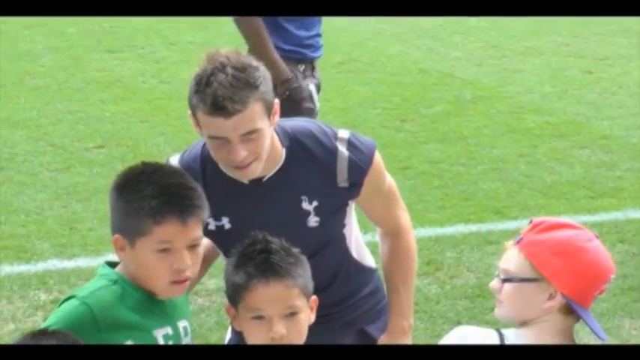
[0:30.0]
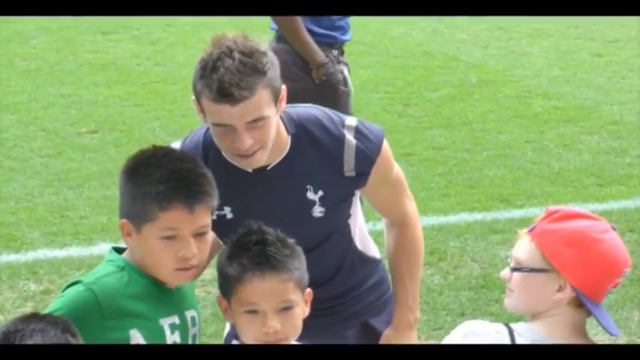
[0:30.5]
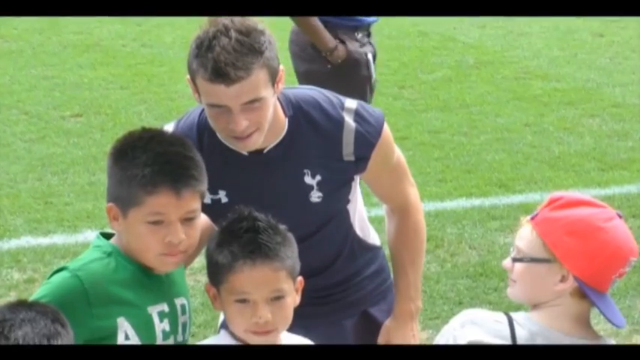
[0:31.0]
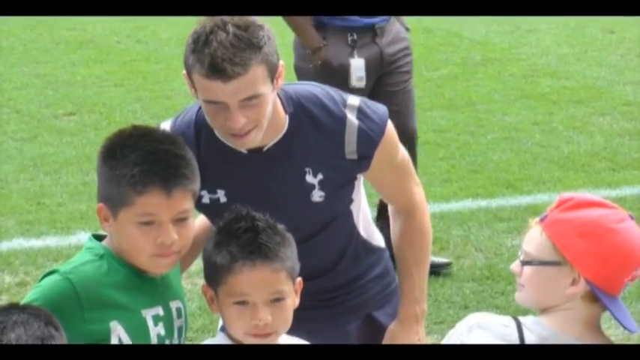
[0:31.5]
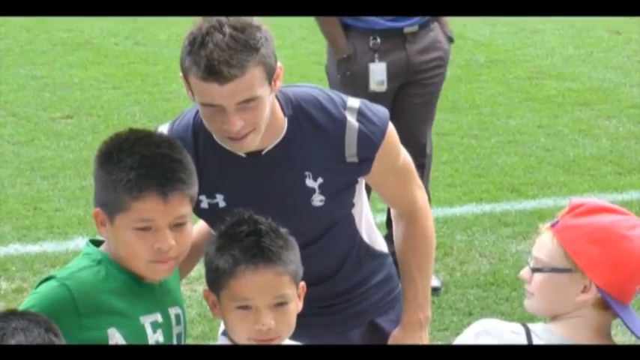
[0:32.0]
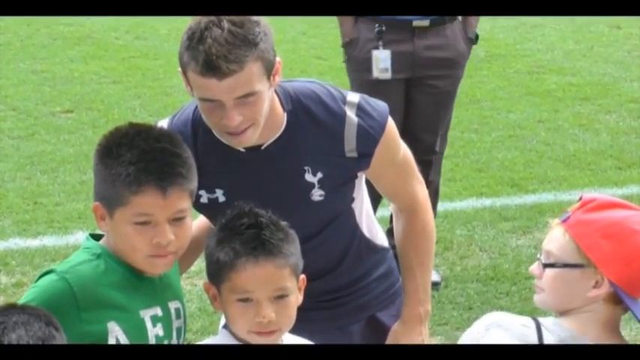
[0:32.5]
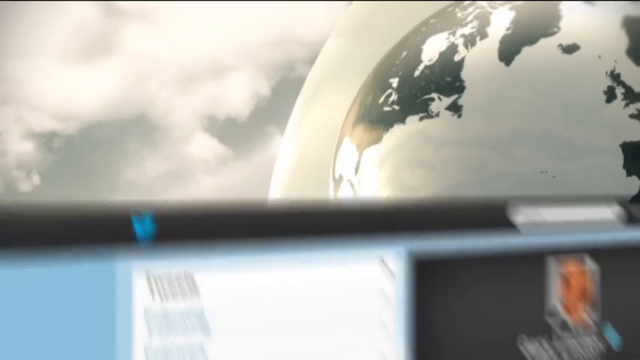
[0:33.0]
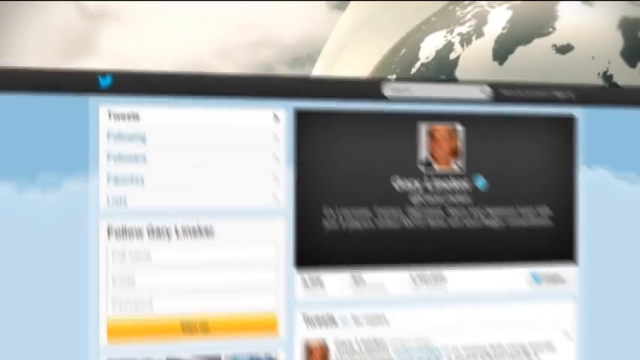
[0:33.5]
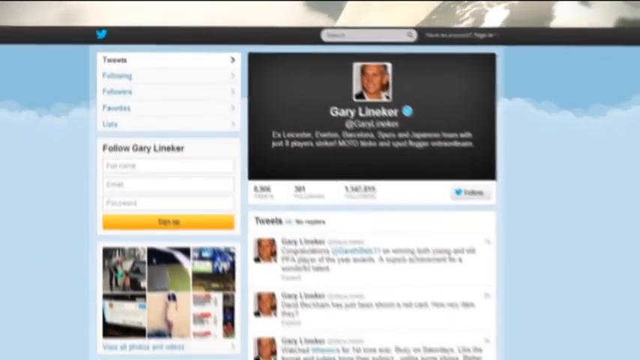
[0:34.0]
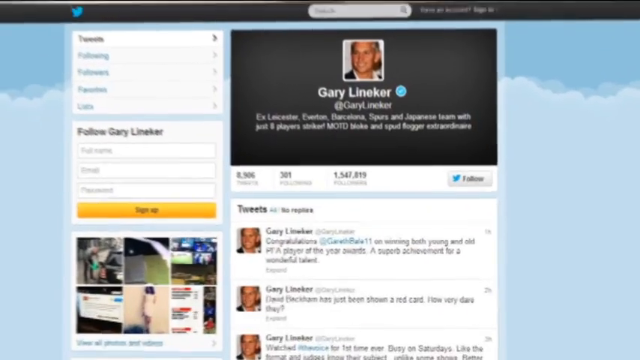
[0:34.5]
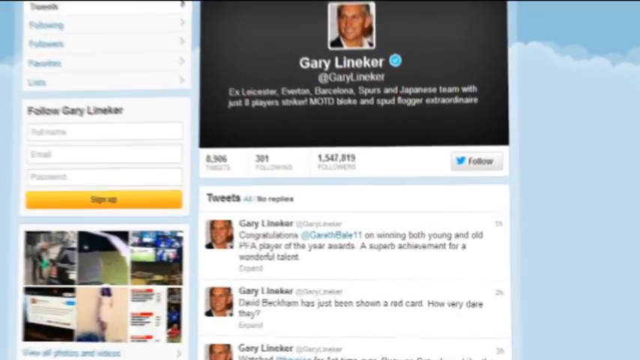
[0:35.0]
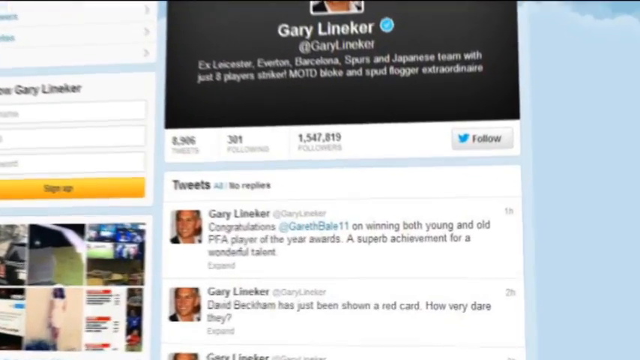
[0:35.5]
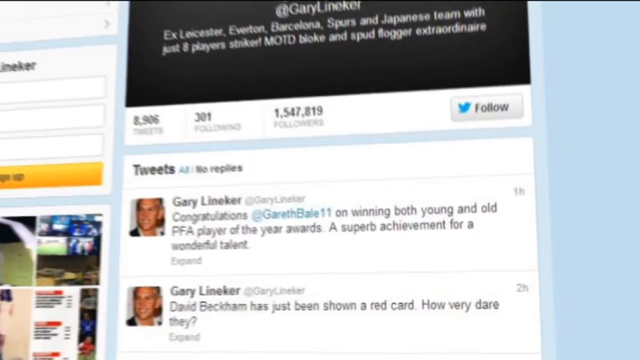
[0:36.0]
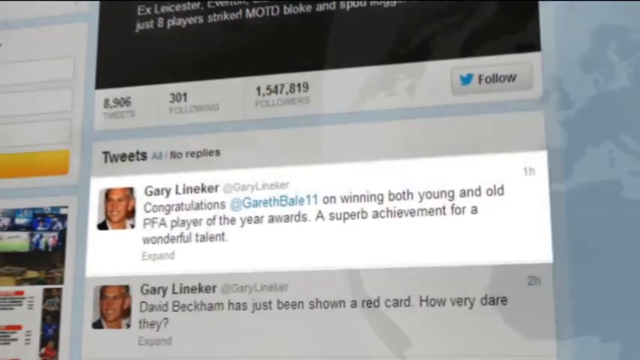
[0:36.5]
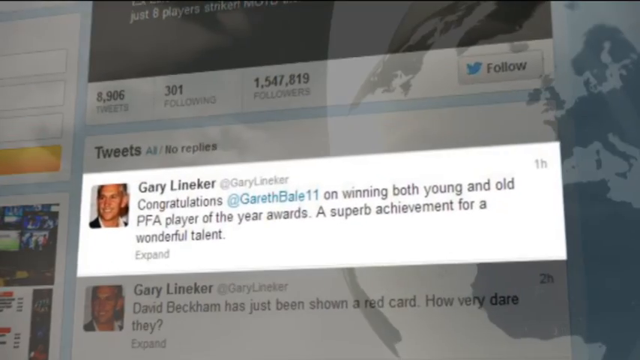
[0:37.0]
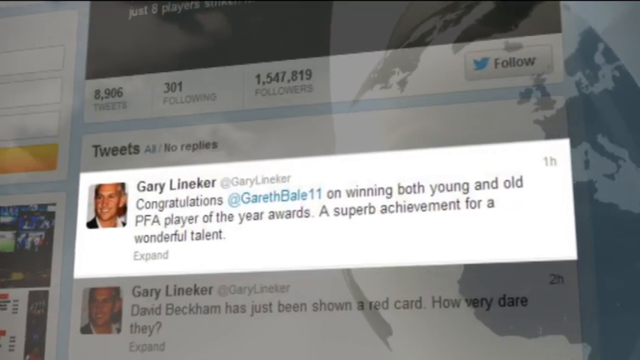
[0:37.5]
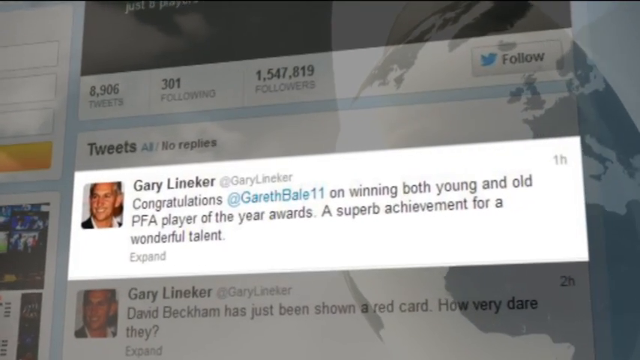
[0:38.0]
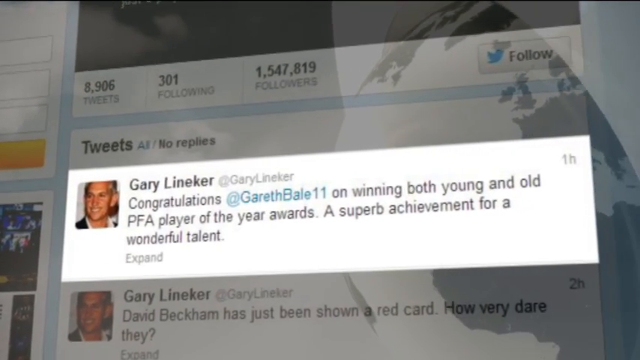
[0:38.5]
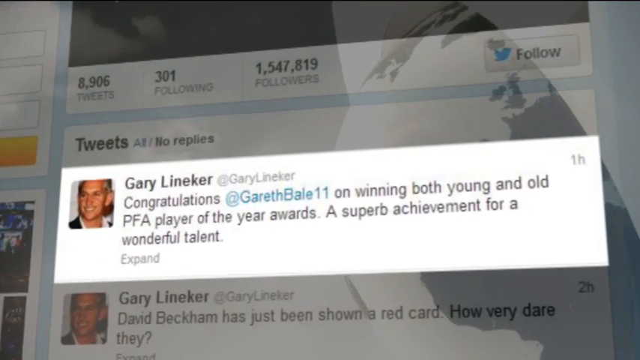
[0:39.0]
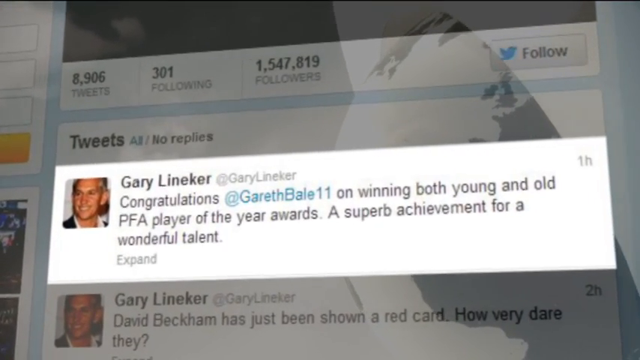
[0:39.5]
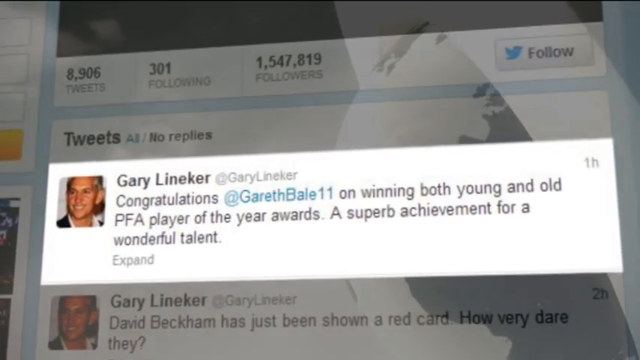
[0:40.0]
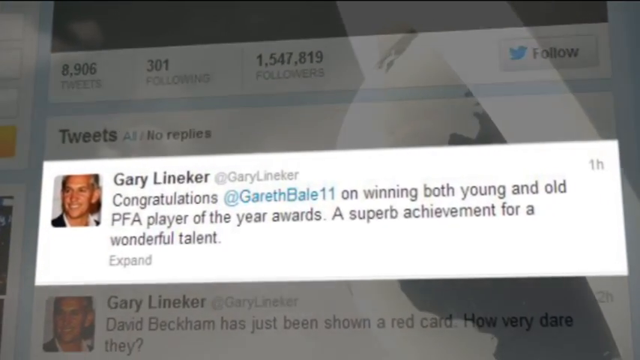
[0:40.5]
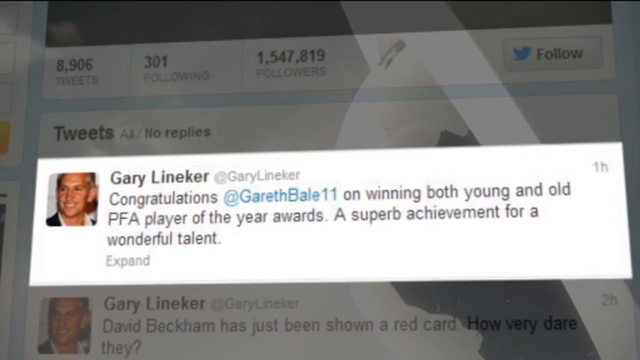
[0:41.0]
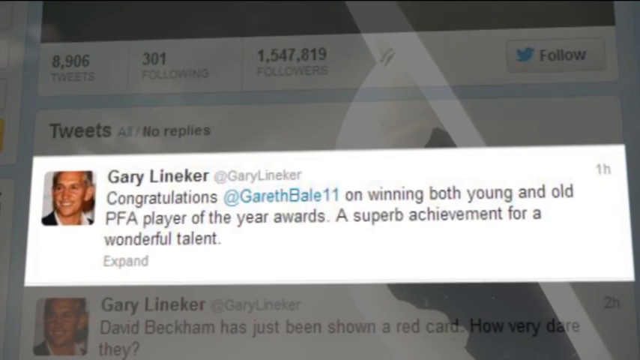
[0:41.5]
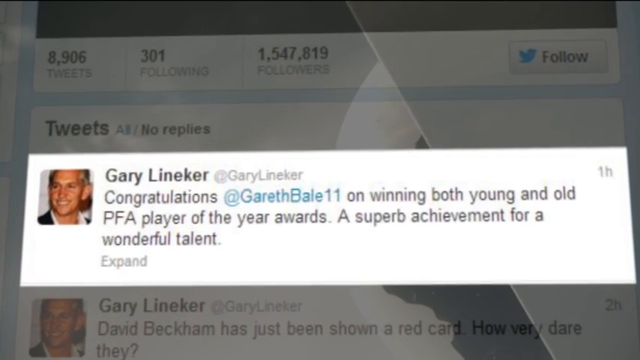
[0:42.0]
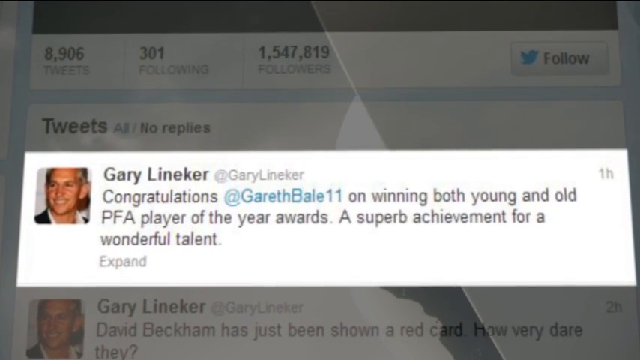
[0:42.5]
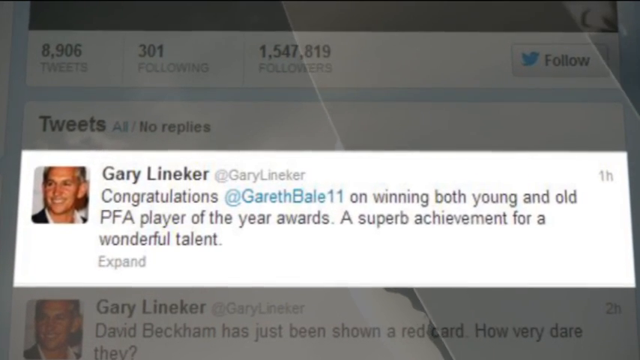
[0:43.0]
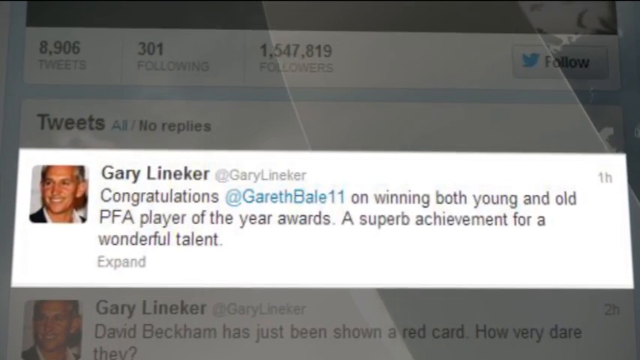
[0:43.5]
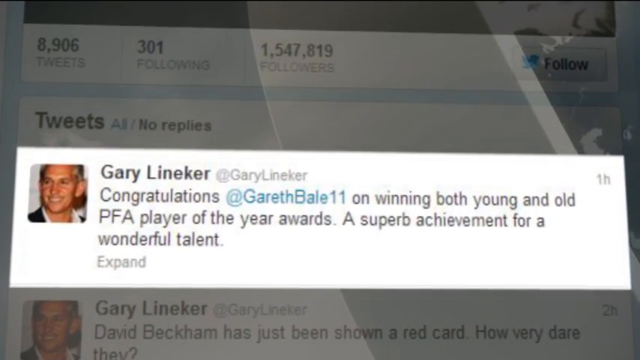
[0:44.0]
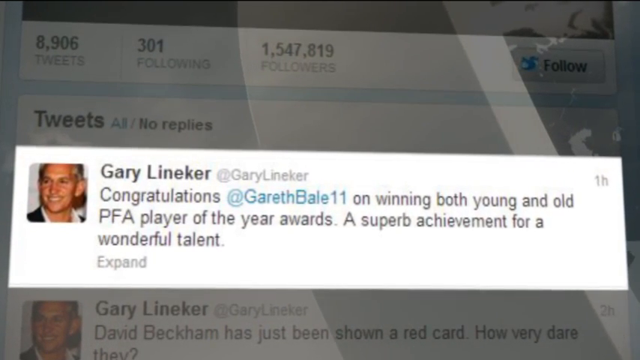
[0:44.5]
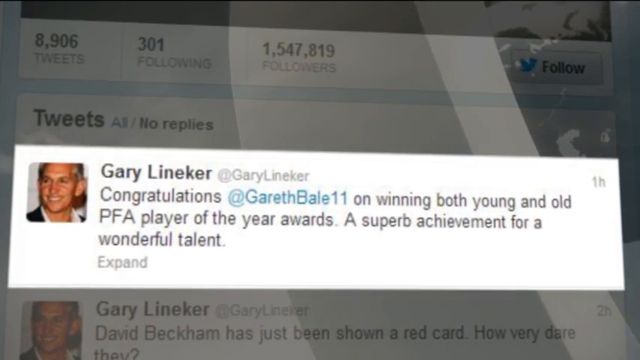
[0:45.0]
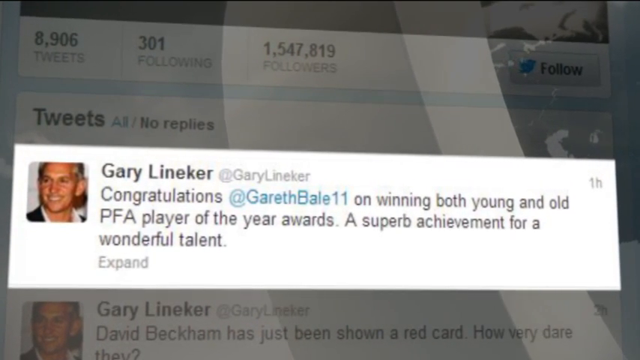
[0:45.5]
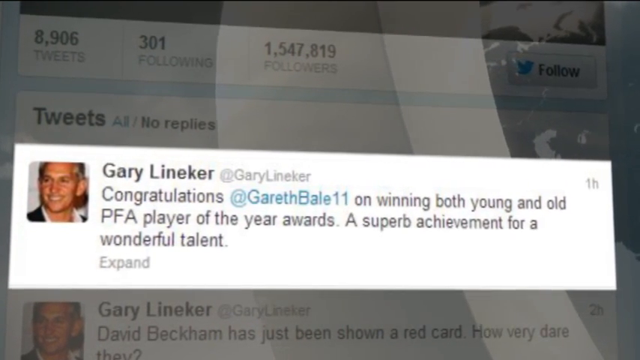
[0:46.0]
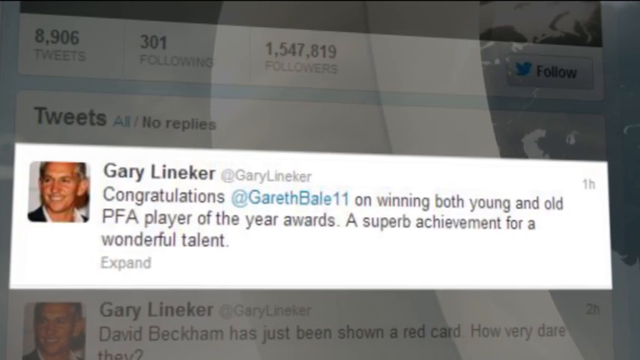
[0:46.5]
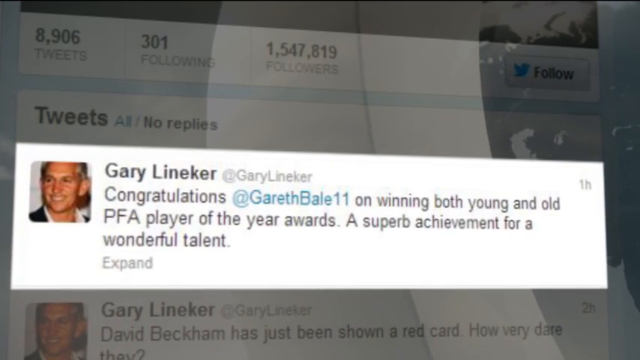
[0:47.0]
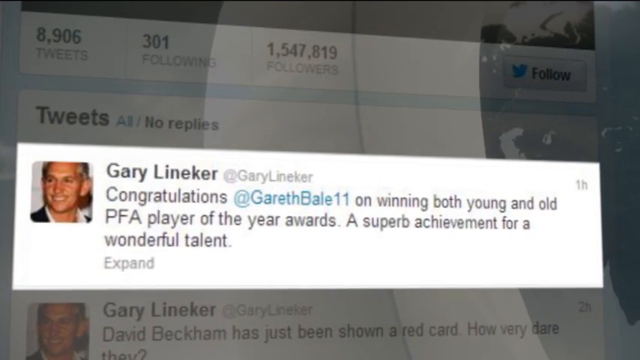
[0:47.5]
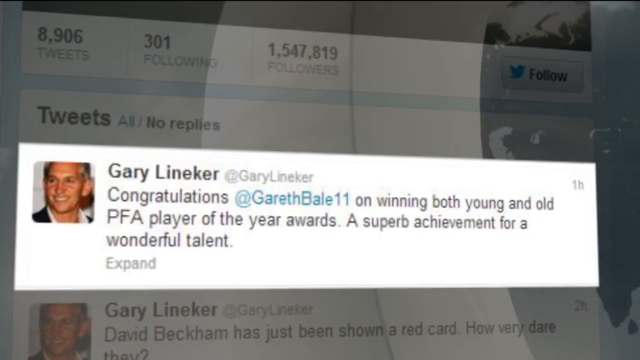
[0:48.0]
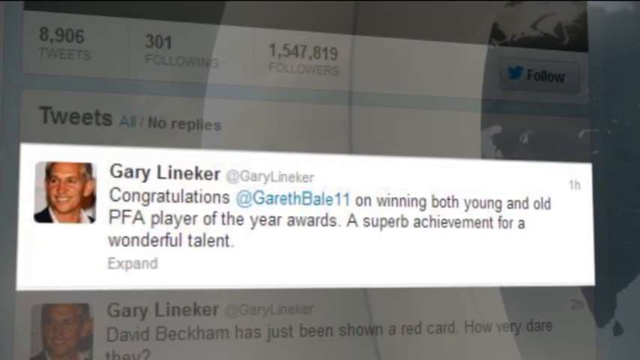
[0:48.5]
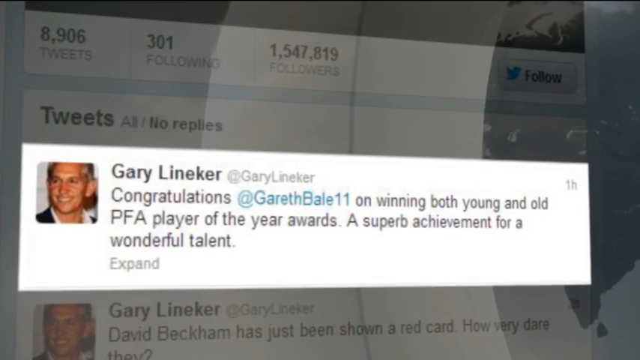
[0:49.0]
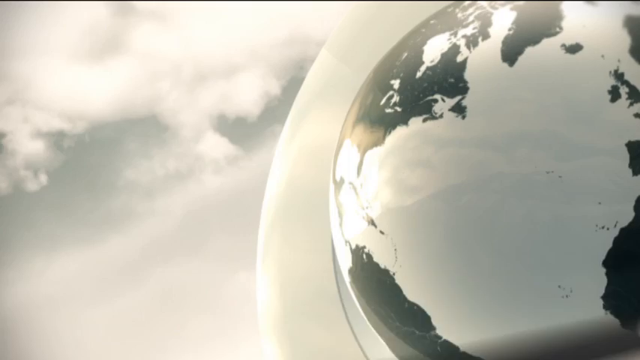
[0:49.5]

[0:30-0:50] The scene with the kids continues for a while. Then a Twitter graphic appears: a screenshot of Gary Lineker's Twitter page on a background of clouds, showing his feed. His last tweet congratulates a player "on winning both young and old FIFA player of the year awards a superb achievement for a wonderful talent", and his next tweet reads "David Beckham has just been shown a red card how very dare they". The video focuses on the last tweet, about Gareth Bale, highlighting it in white while the graphic moves with a map of the world in the background; it then moves to show only the tweet on a white background. Another Twitter feed then starts to come up.